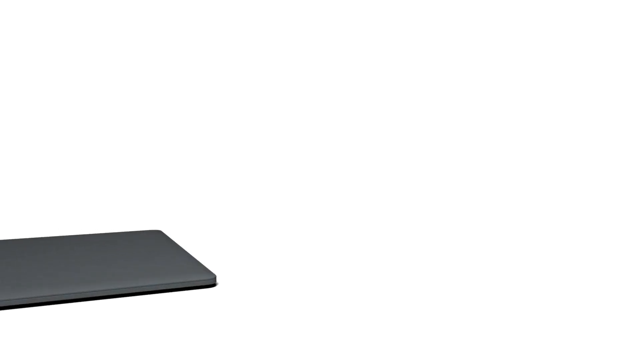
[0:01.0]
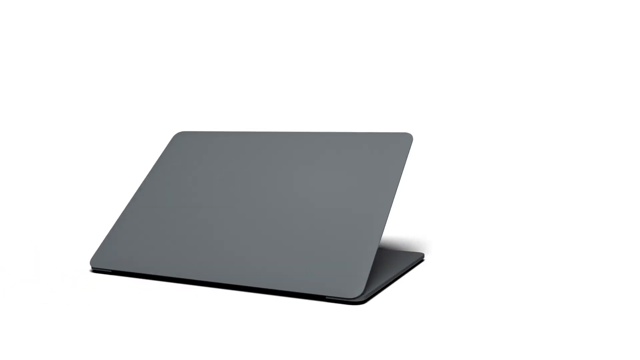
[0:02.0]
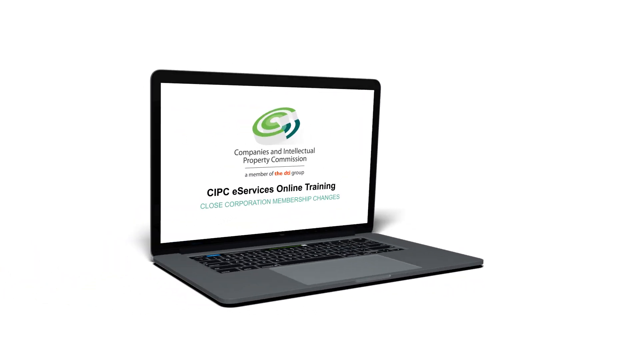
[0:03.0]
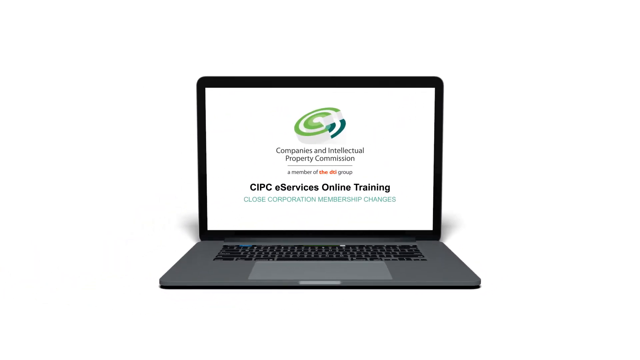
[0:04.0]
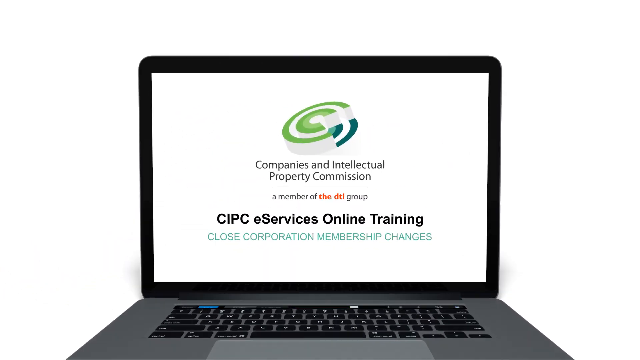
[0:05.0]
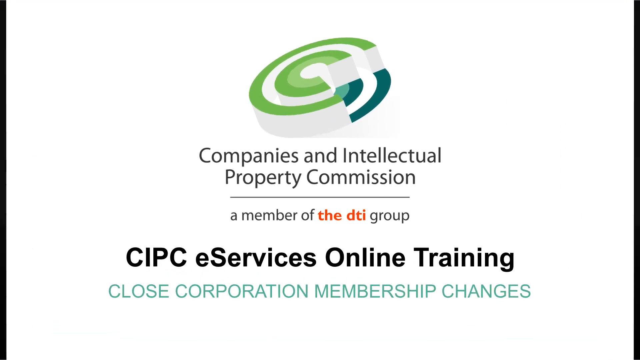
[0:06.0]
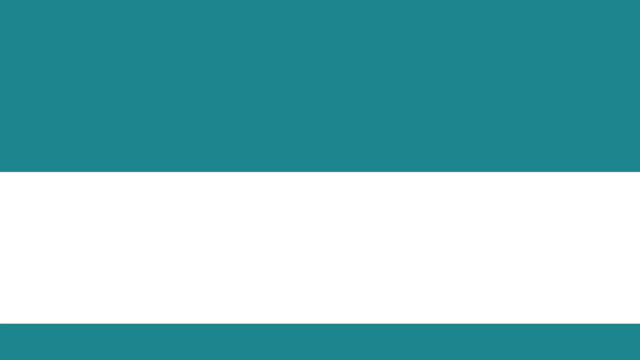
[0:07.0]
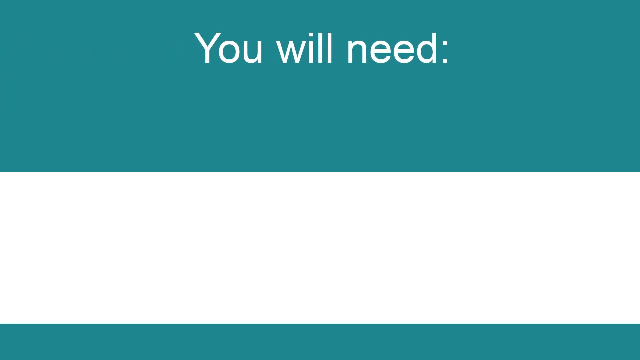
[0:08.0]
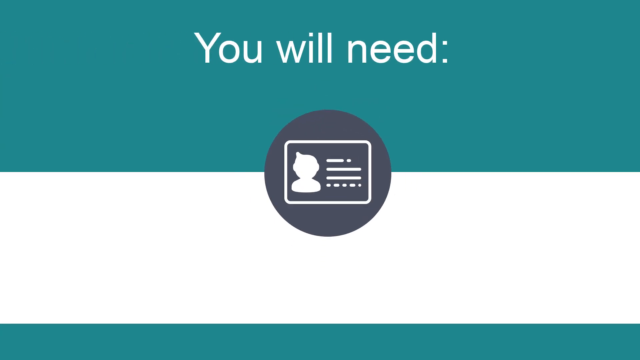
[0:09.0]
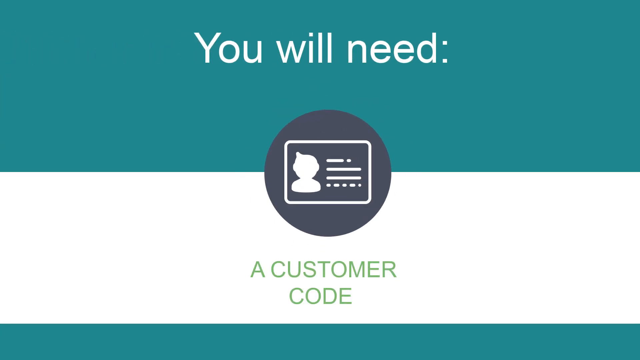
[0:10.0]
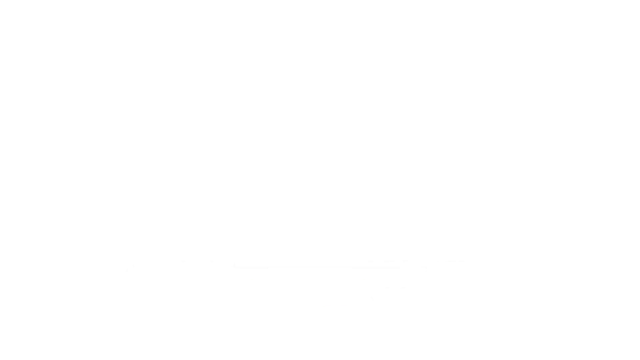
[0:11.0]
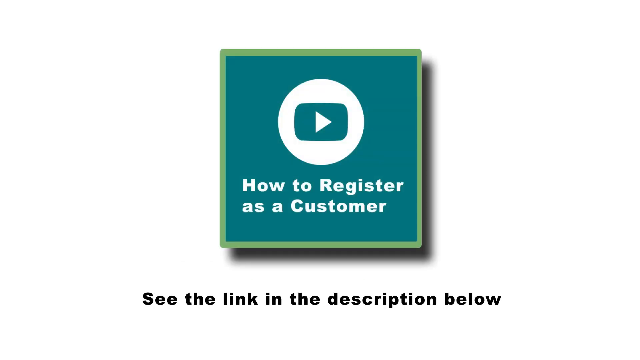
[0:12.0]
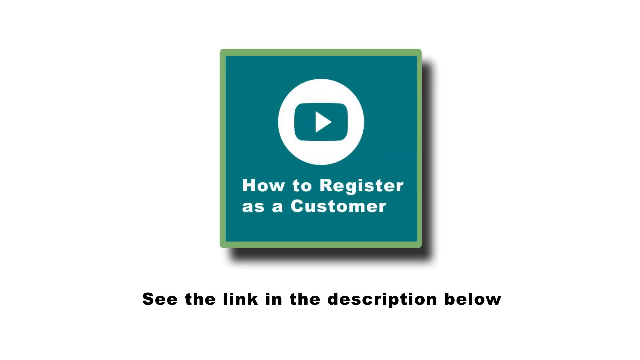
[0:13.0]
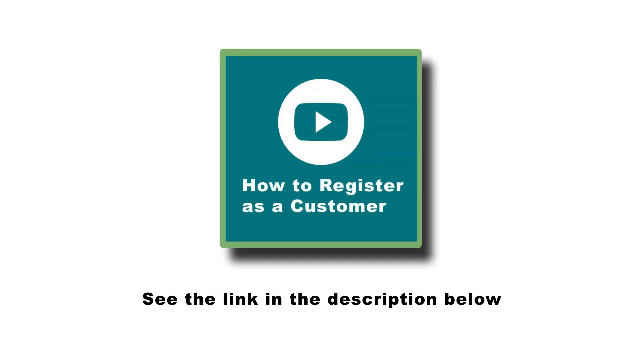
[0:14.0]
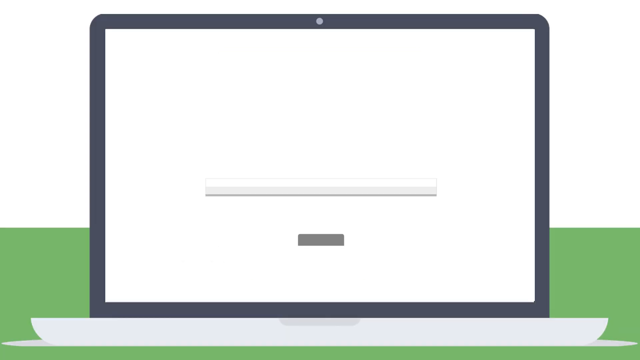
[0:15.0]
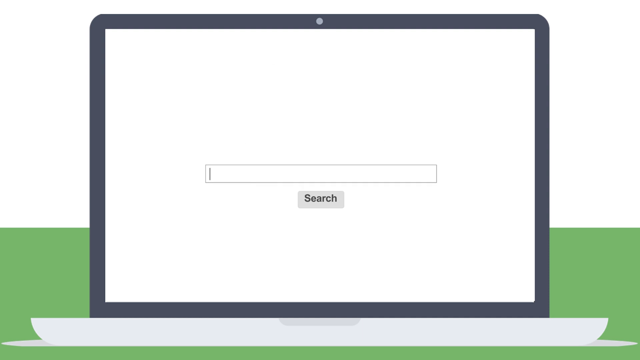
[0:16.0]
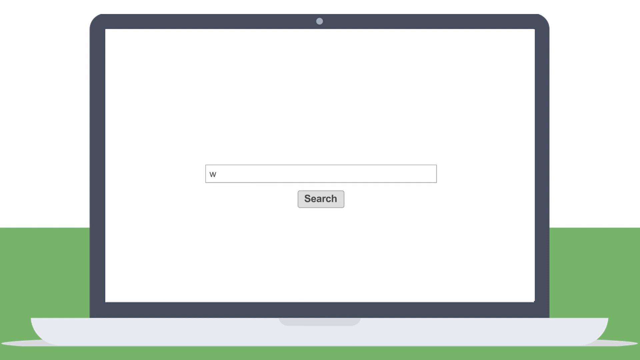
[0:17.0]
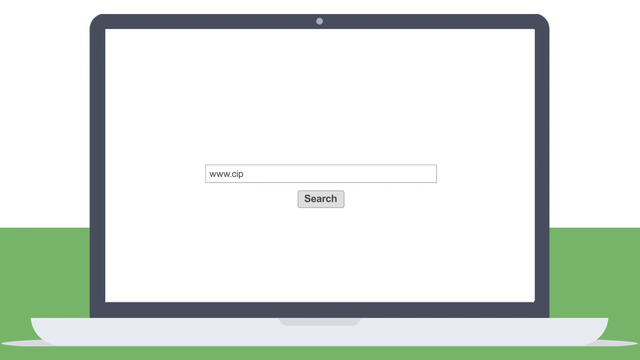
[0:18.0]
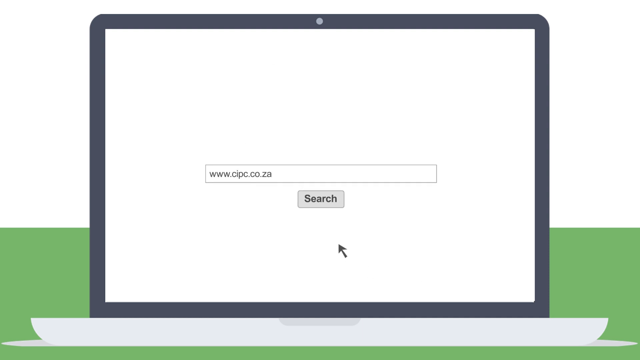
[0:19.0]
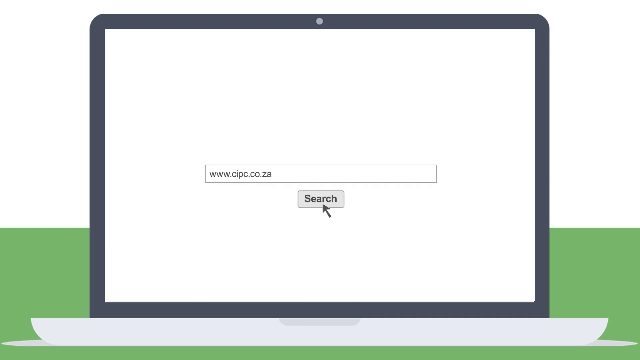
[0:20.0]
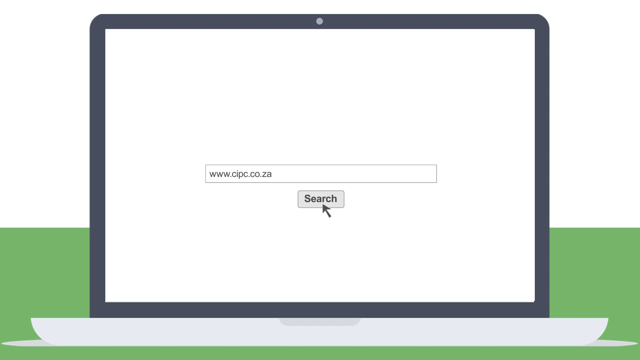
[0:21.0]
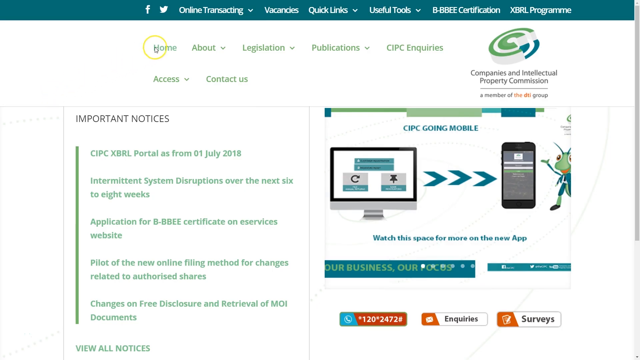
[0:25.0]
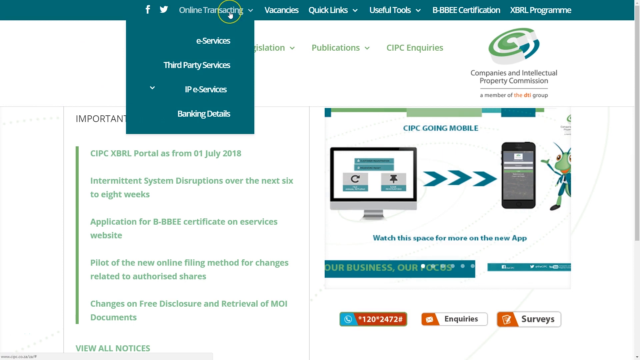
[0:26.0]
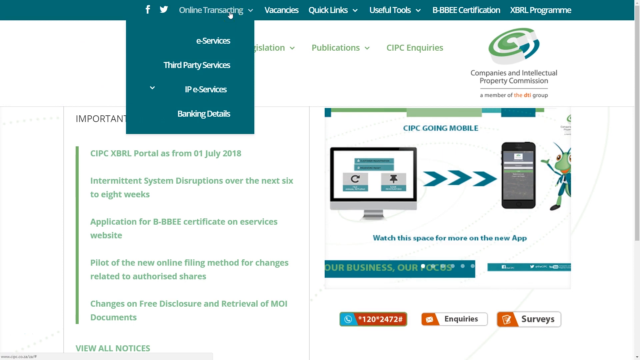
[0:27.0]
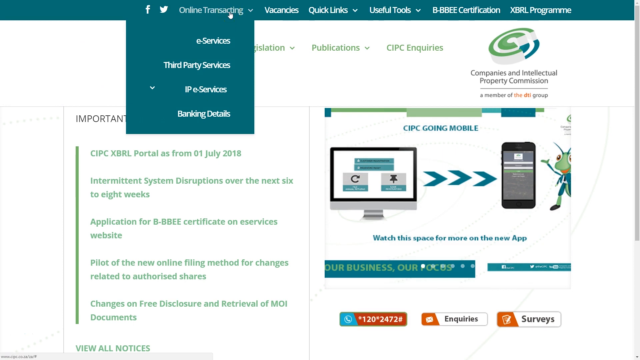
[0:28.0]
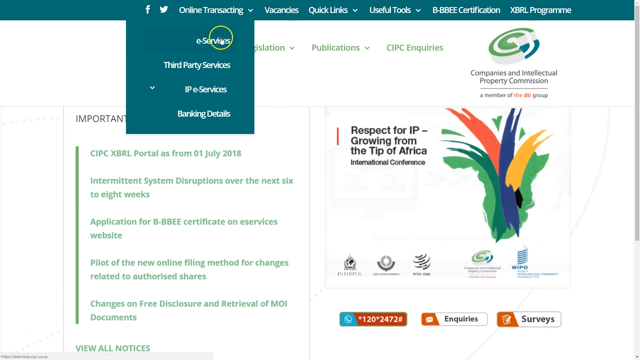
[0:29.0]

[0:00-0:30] A laptop spins around, and the screen shows text about companies, indicating that a customer code is needed to activate the program. In the upper right-hand corner is "how to register as a customer" with an arrow that can be clicked. Text at the bottom says "see the link in the description below." The laptop appears again, and the screen says "search" as somebody types in a website. They click in the search bar, where a black cursor is visible. They then click something up top, opening another section, but what comes after that section is not shown.